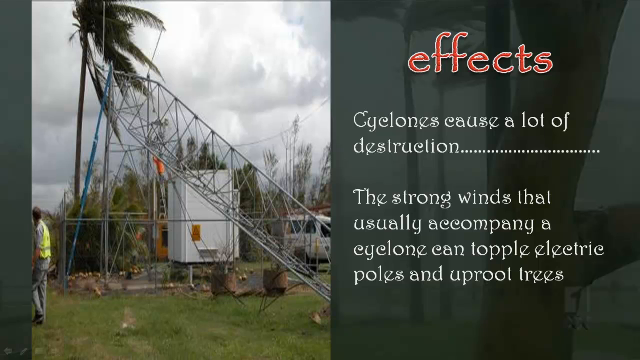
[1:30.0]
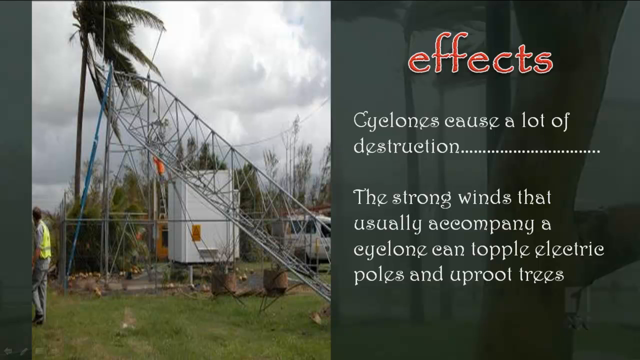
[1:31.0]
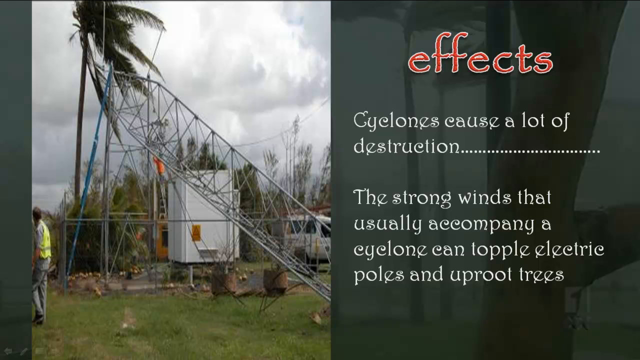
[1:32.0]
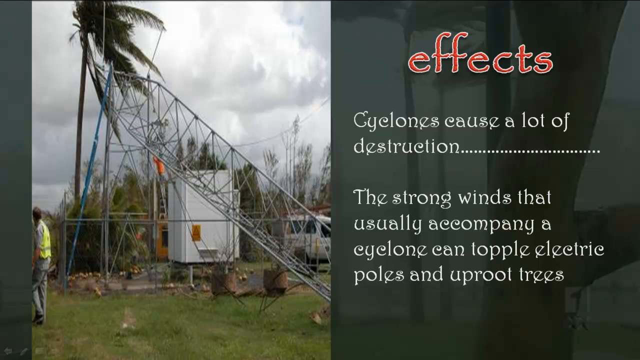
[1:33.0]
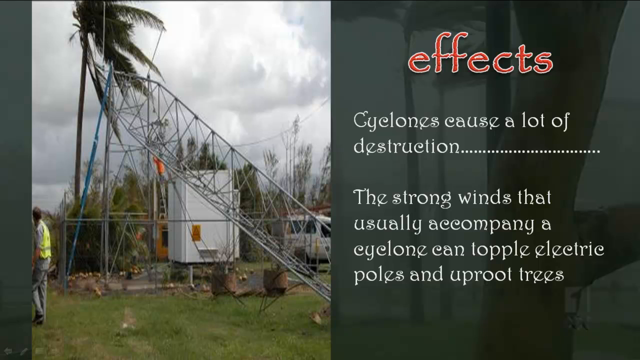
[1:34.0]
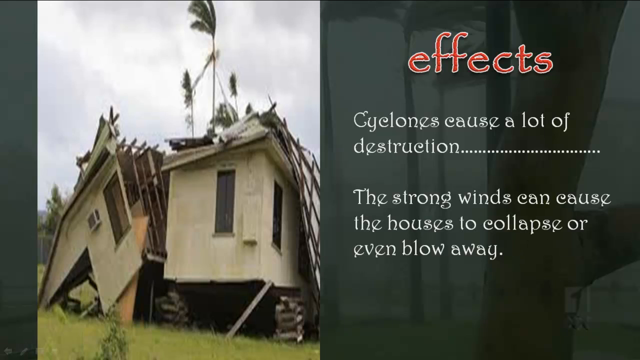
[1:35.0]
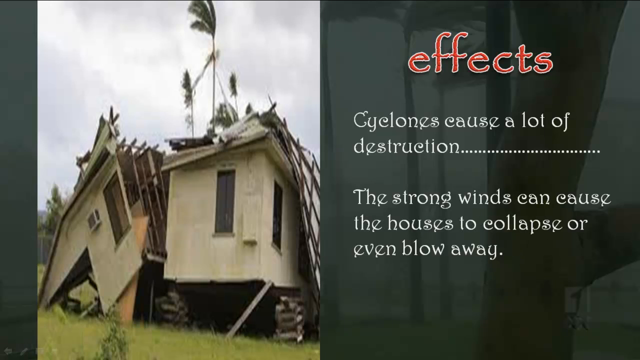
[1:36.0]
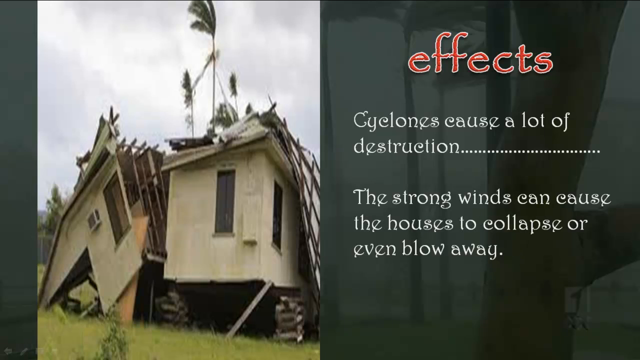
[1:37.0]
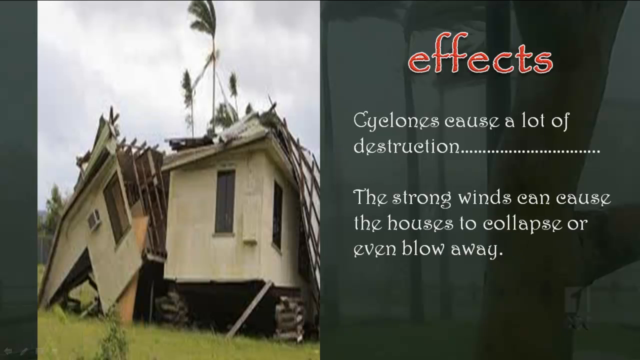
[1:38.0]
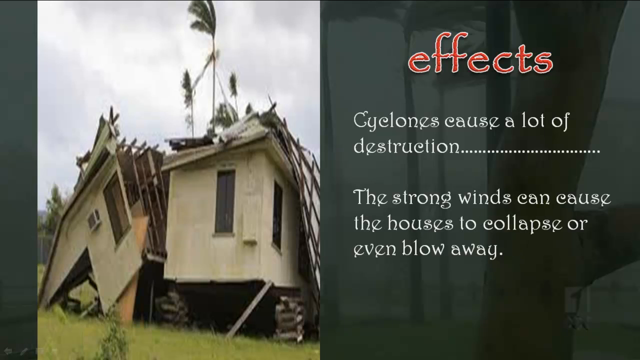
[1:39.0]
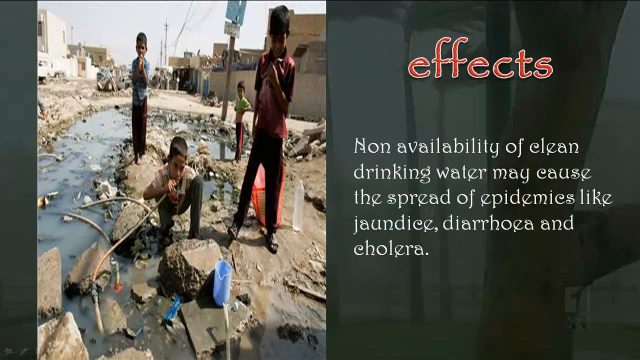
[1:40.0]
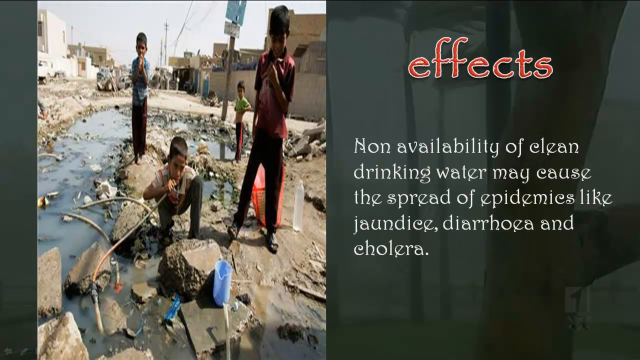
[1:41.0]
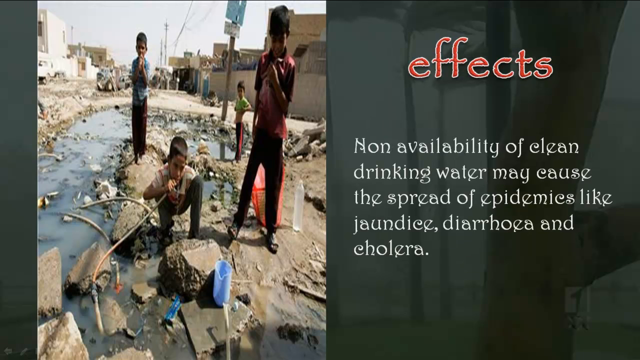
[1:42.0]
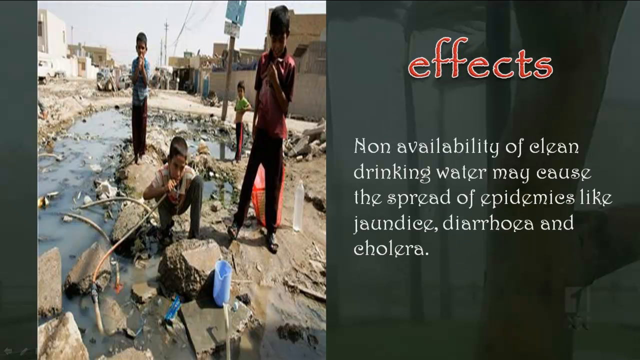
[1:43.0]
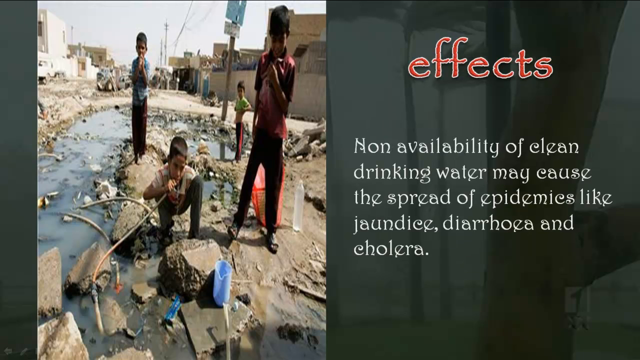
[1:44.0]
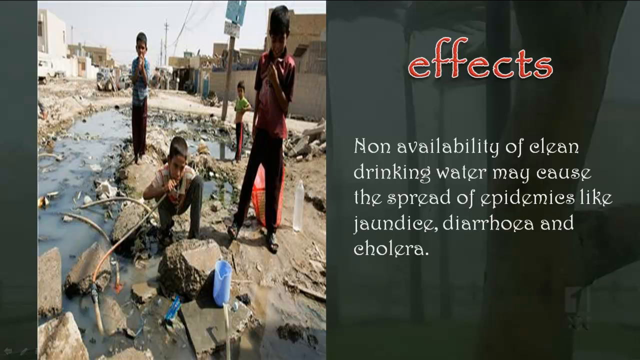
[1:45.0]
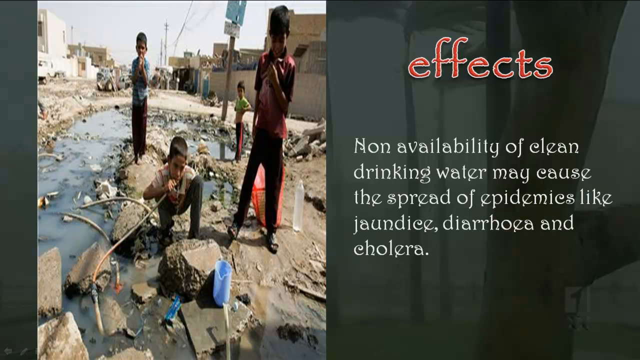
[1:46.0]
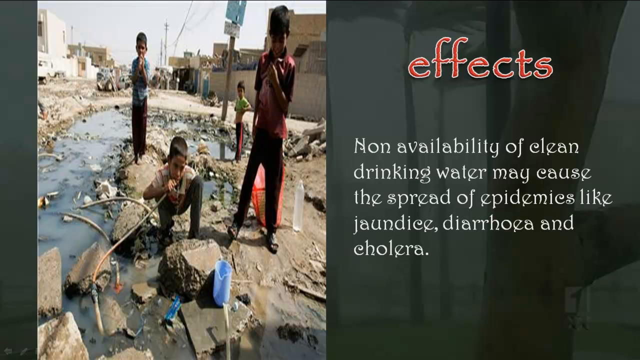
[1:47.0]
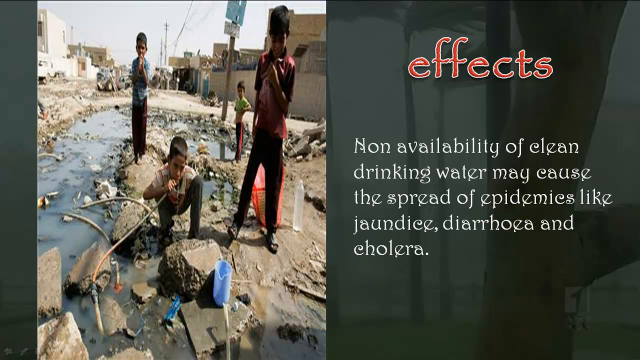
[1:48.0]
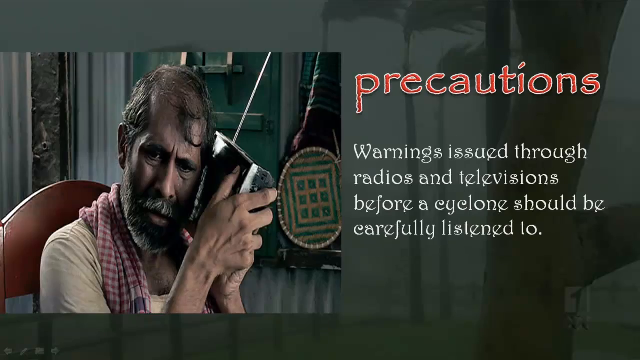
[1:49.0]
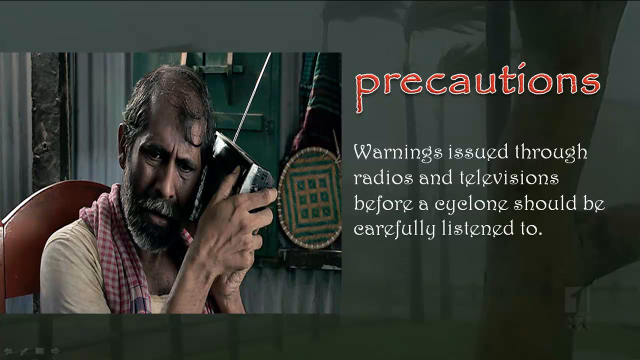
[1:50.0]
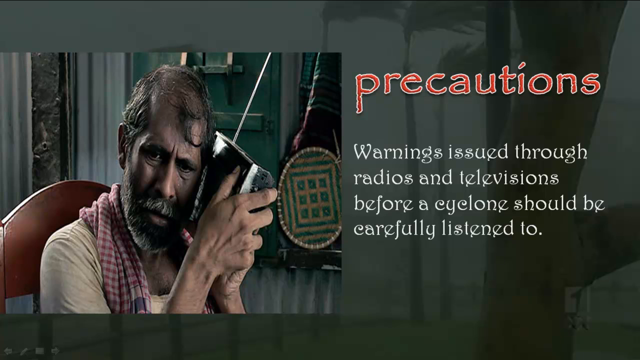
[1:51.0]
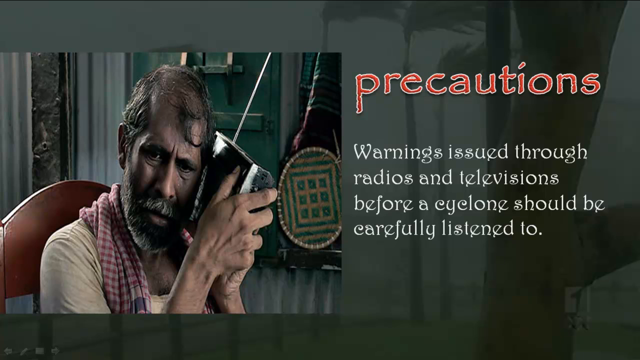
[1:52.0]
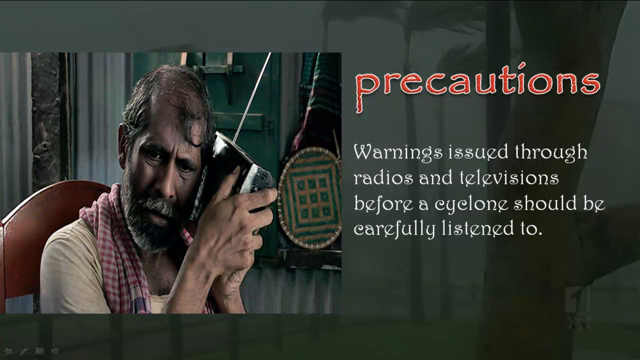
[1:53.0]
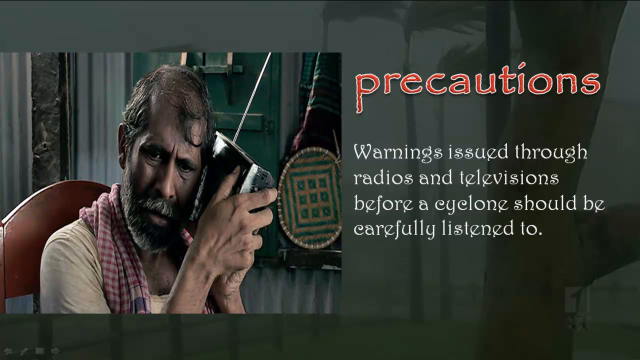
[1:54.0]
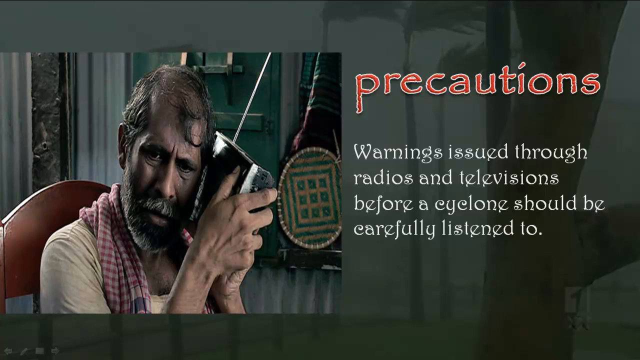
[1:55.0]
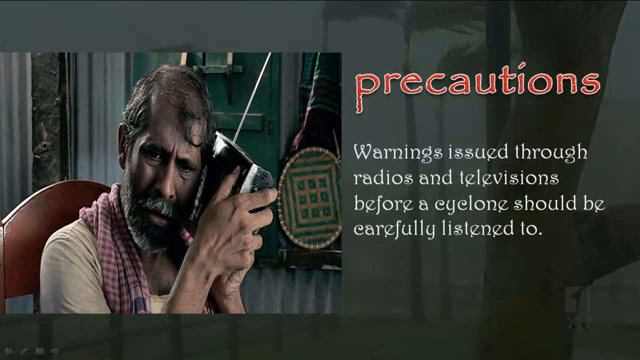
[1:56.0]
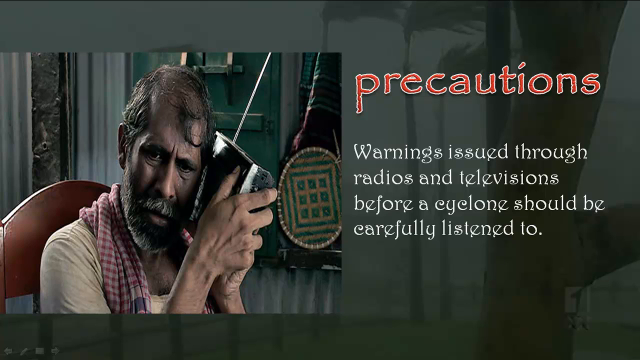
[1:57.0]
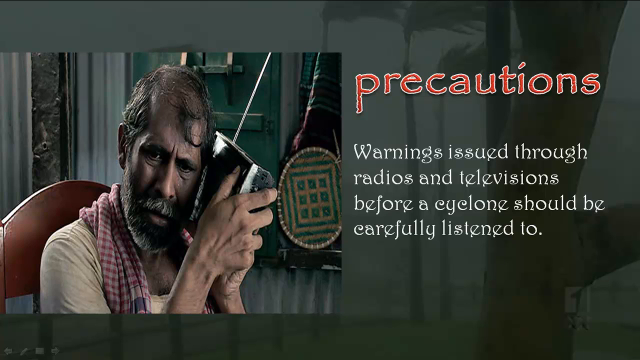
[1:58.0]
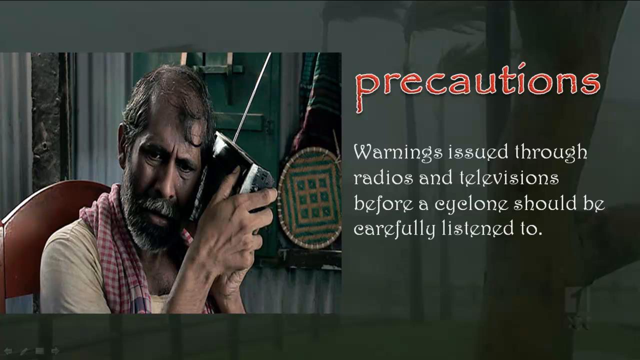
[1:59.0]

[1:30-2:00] The effects slide on strong winds toppling electric poles and uprooting trees continues, with toppled electric poles and uprooted trees on the left. Next, on the right, a drastic image shows a house cut in half, with text saying strong winds can cause houses to collapse or even blow away. Another slide says a lack of clean water "may cause the spread of epidemics like jaundice diarrhea and cholera," with an image of poor children drinking water off the ground. A precautions slide follows, saying warnings issued through radios and televisions before a cyclone should be carefully listened to, with an image of an old man holding a radio to his head and listening to the news.